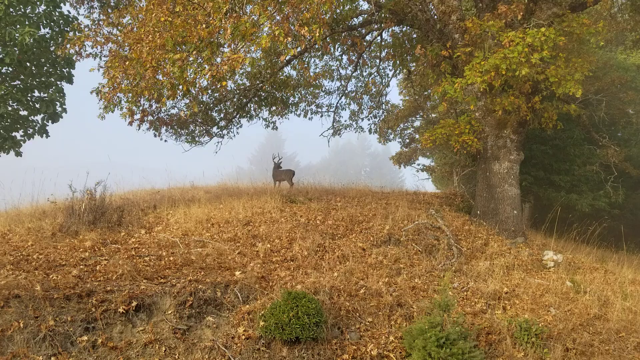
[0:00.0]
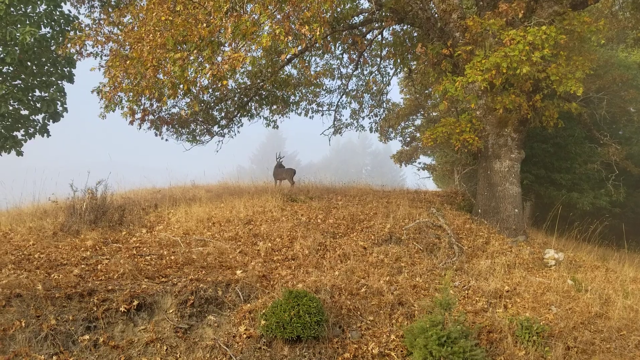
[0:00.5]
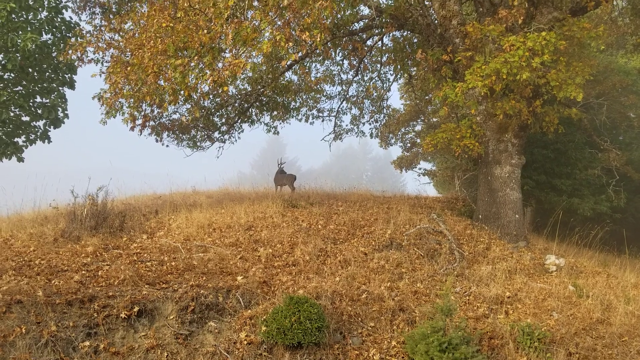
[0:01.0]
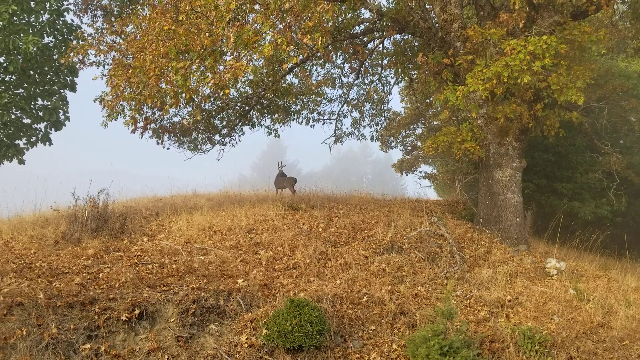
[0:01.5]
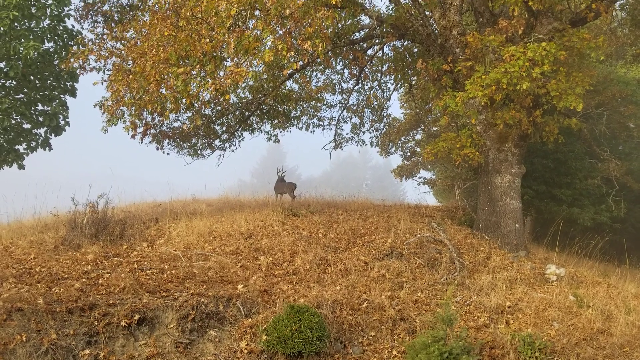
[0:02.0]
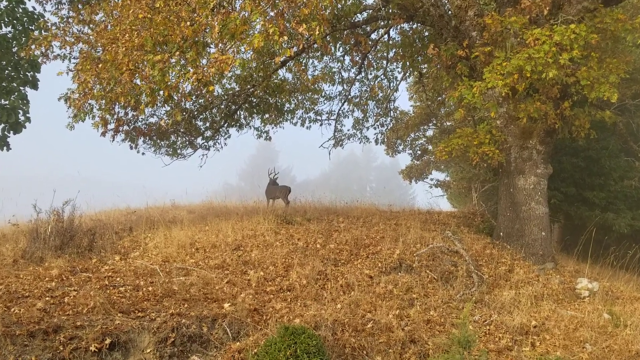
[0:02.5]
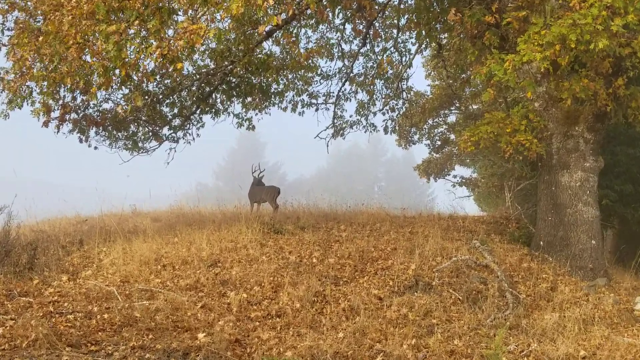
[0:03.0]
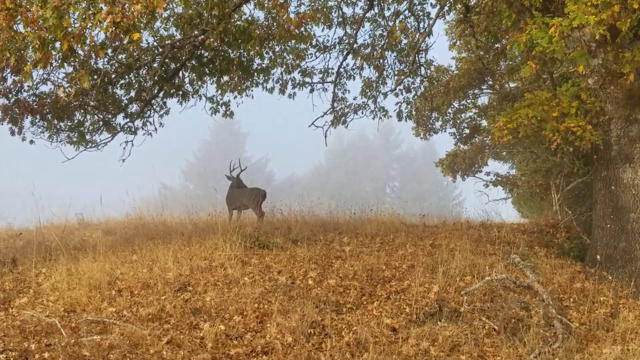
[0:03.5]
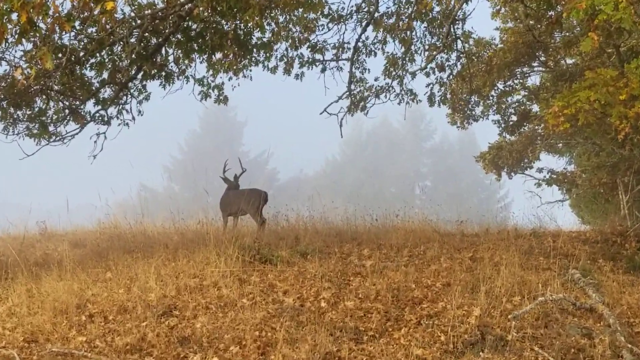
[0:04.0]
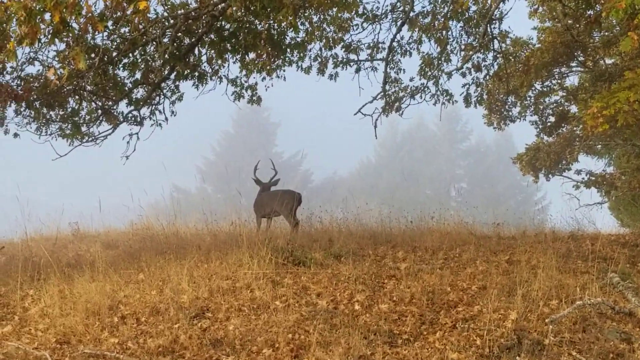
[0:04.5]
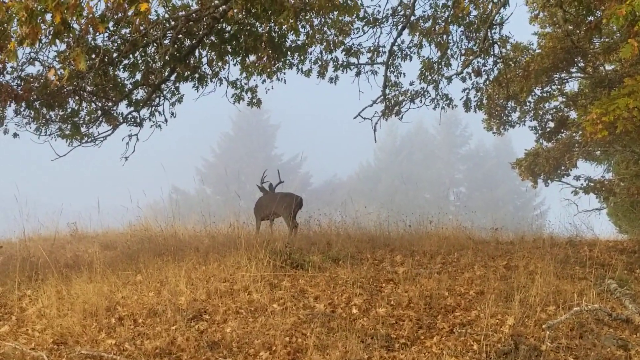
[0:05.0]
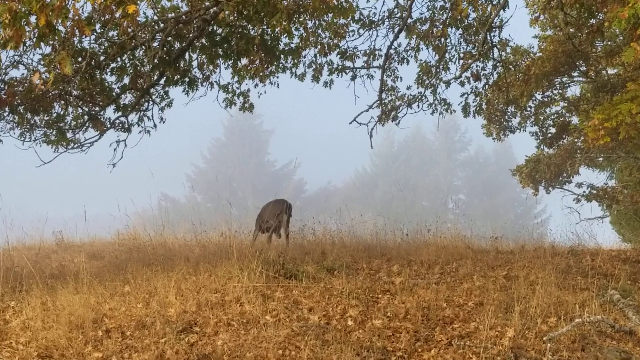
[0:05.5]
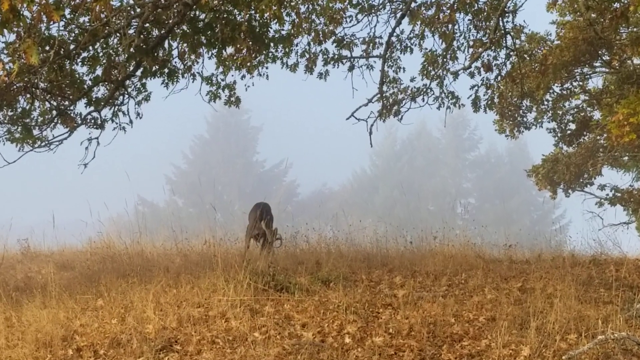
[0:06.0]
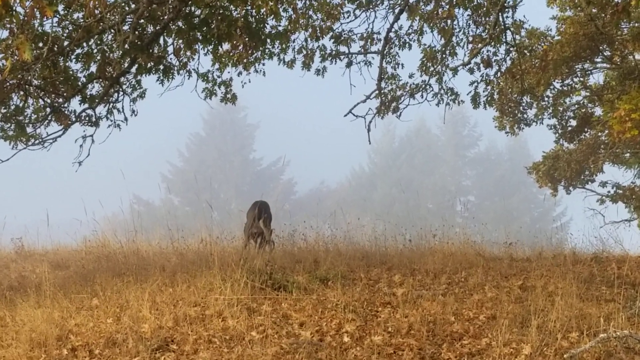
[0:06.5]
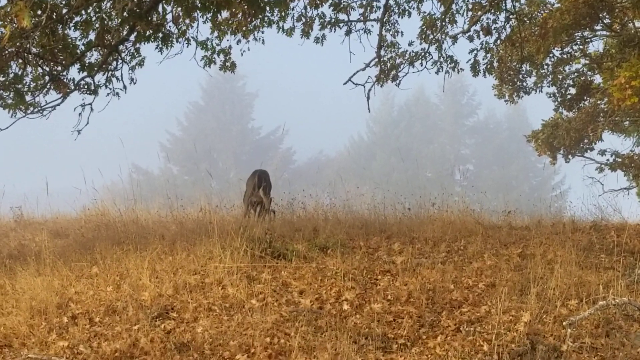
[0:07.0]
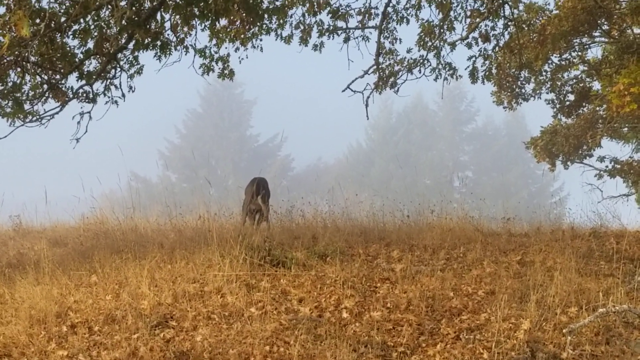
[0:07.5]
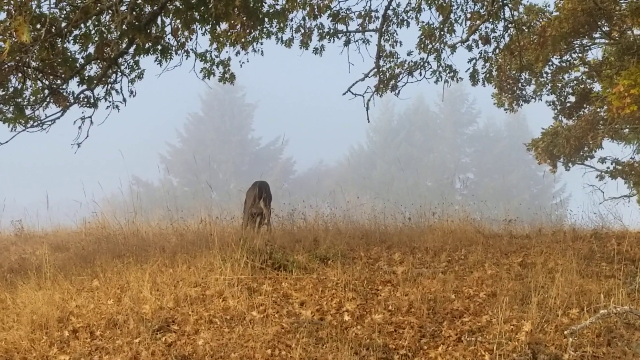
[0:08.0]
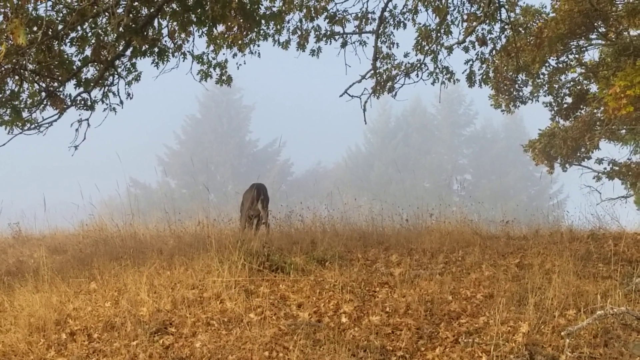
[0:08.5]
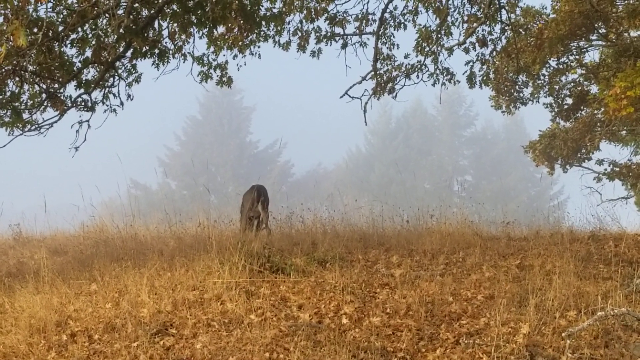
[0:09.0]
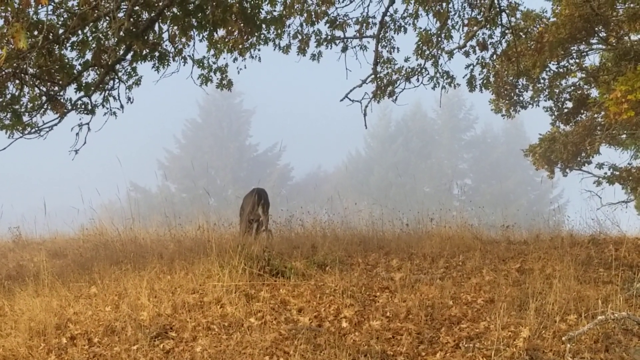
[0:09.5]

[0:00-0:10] What appears to be a deer stands in a forest as the central focus of the shot, looking away from the camera. The grass where the deer is standing is very brownish yellow. A tree not too far from the deer is partially green and partially yellow, suggesting it might be fall. Pine trees are visible in the distance and also off to the right side, beside the tree that is in focus. The deer appears very alert, its head looking off to the right.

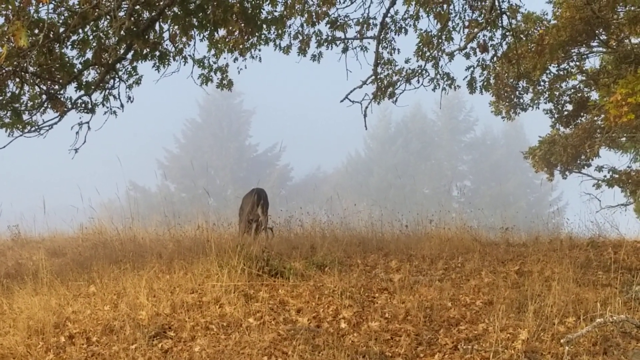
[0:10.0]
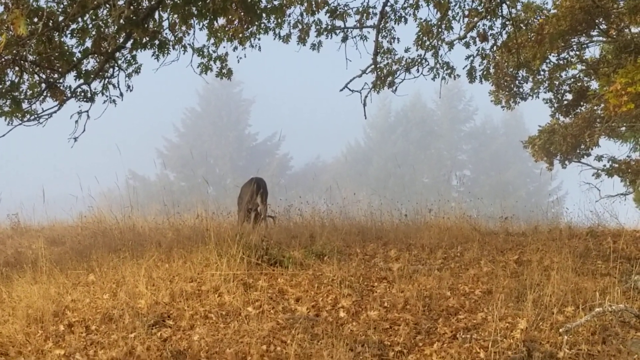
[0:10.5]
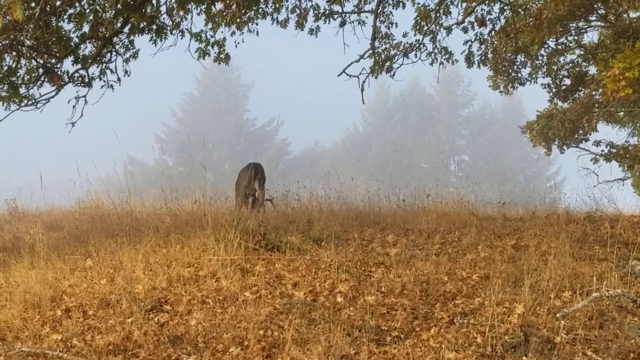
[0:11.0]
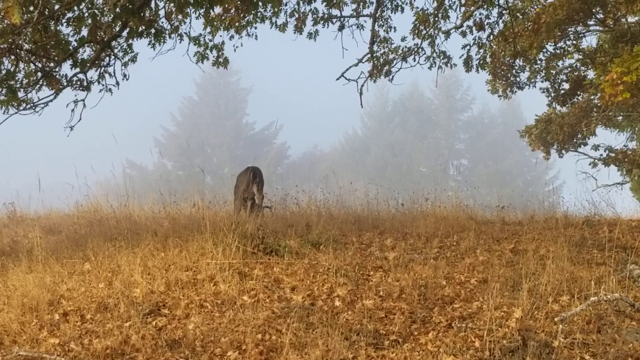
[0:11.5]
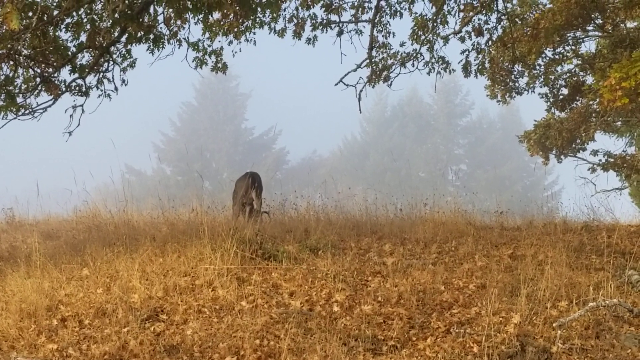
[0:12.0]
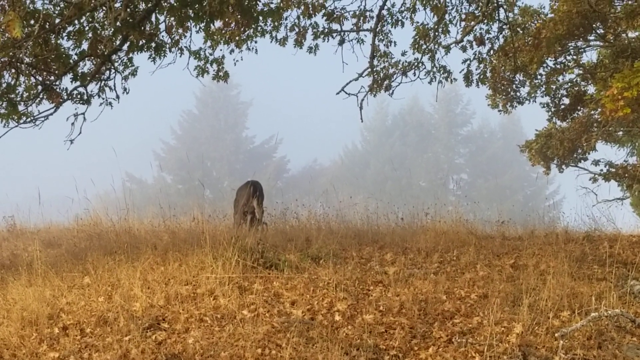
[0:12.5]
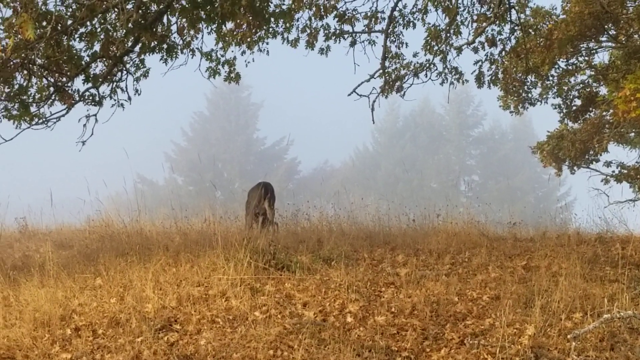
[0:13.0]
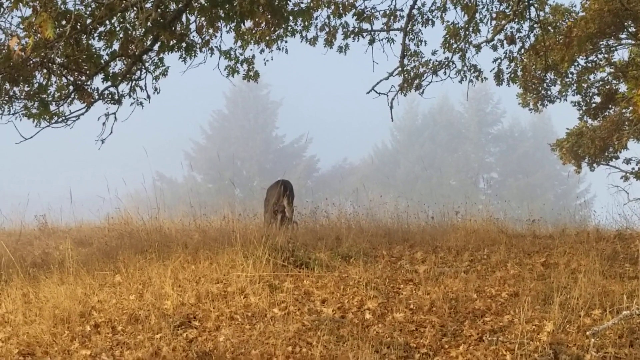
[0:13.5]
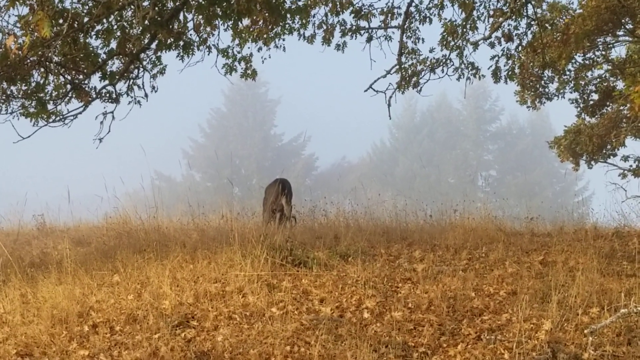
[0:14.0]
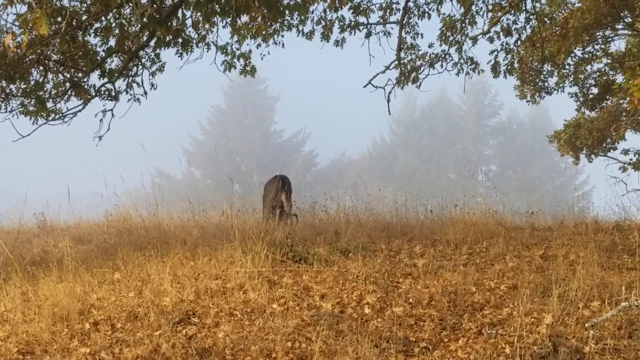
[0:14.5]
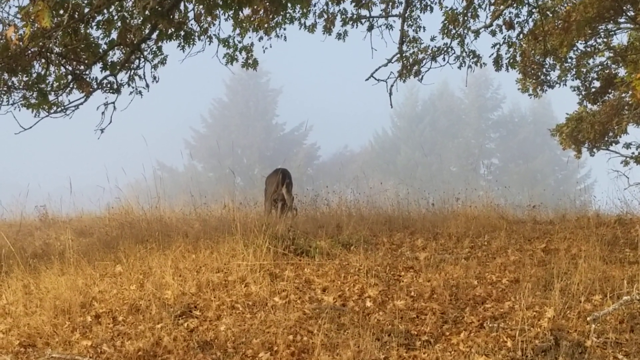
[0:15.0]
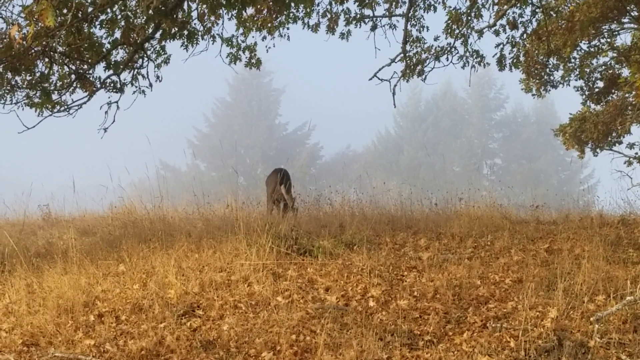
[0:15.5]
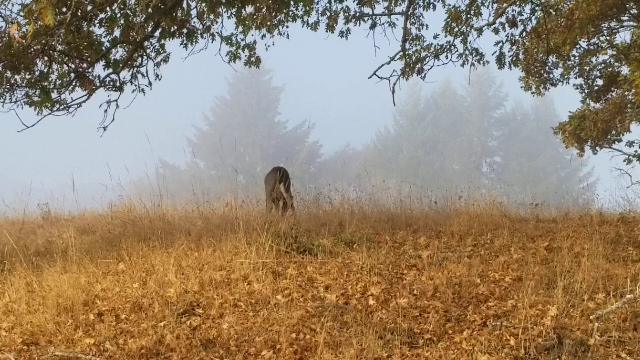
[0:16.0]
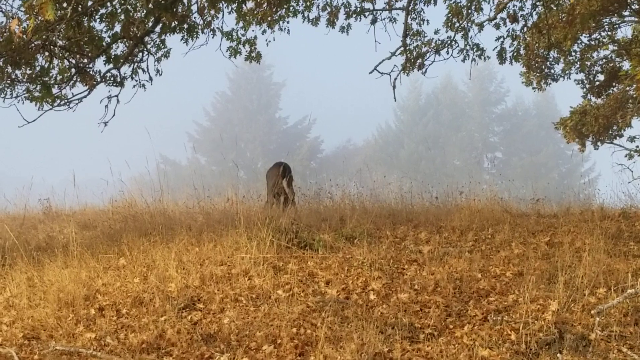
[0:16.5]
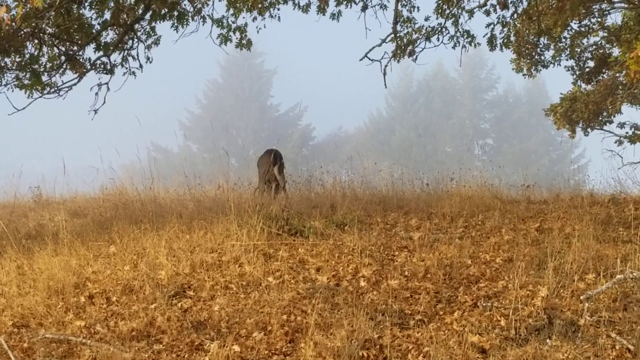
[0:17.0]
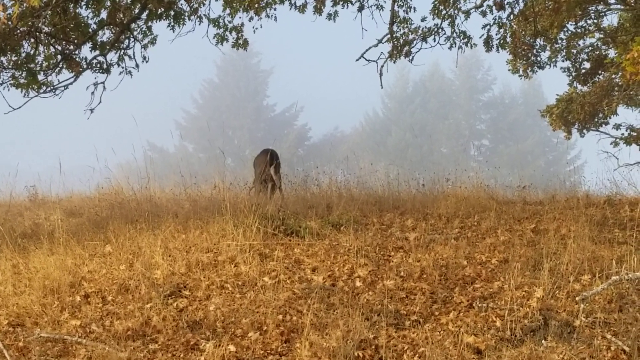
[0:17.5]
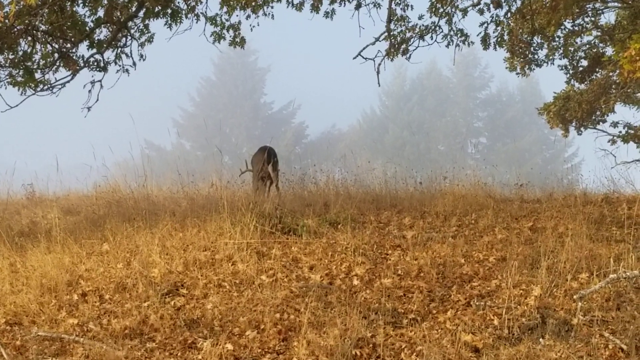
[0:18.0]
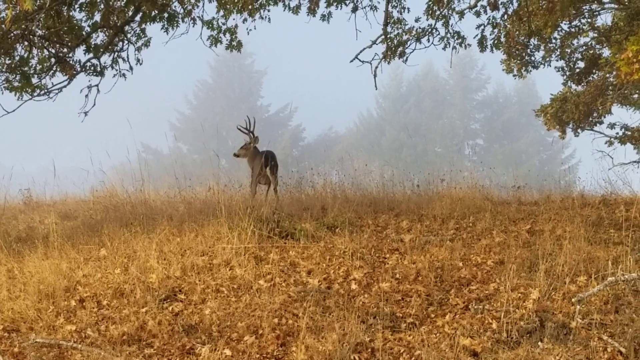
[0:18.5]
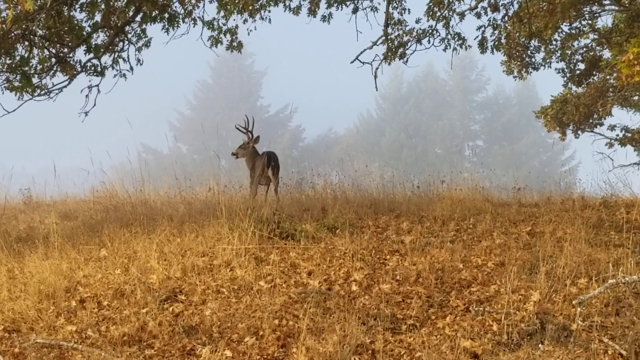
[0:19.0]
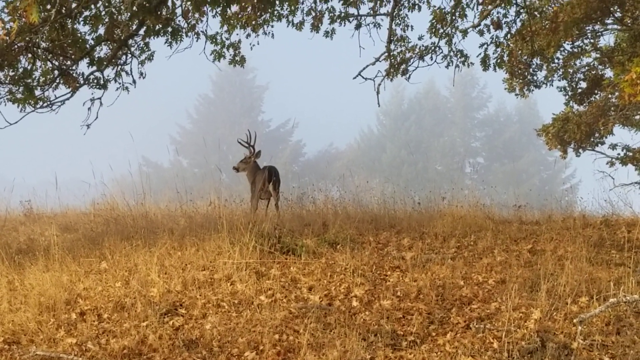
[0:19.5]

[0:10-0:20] The deer stands in the middle of the field, appearing closer this time, apparently because the camera is zoomed in more. The camera observes the deer as it grazes in the grass, perhaps looking for food or eating, while facing away from the camera. After a few moments of grazing, the deer briefly looks up and to the left, almost as if it has heard something or is suspicious of something. The deer appears to be all alone.